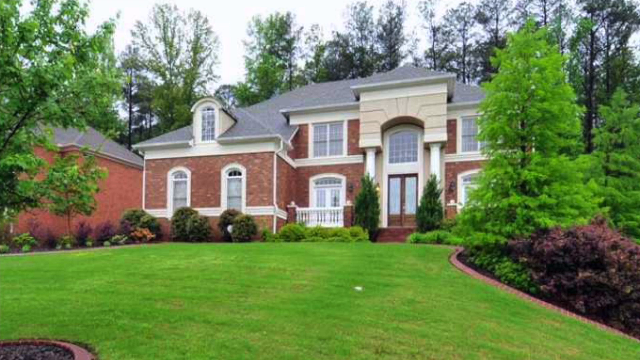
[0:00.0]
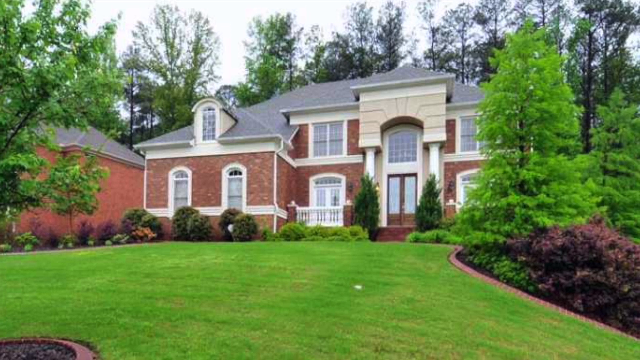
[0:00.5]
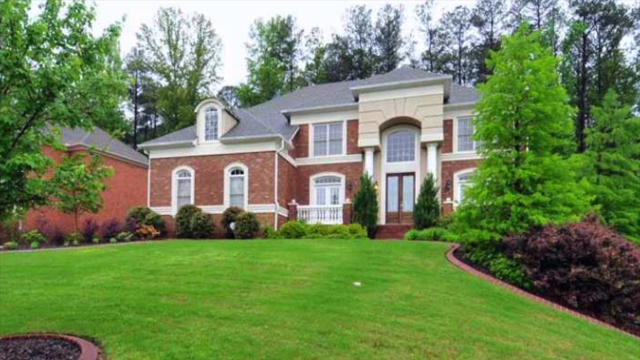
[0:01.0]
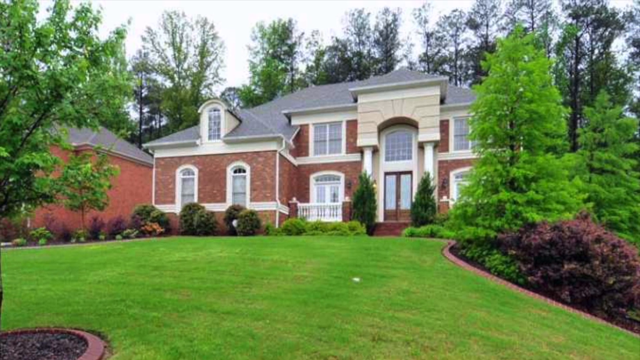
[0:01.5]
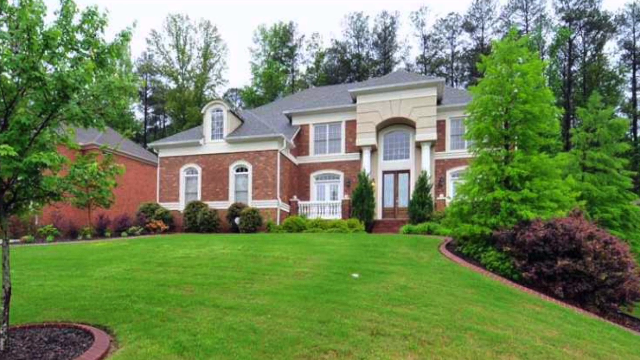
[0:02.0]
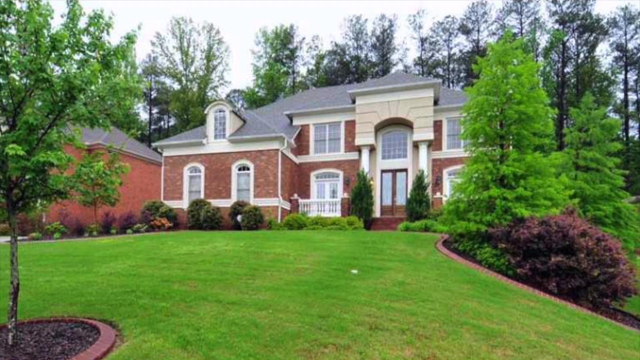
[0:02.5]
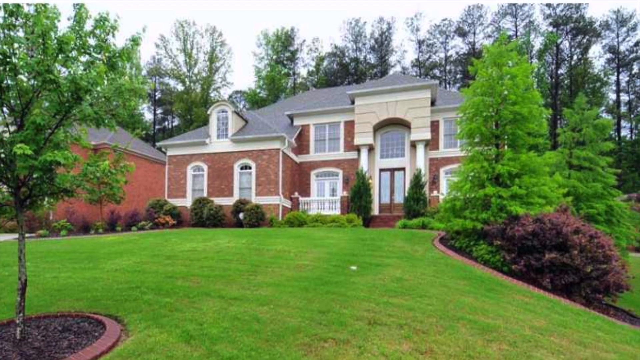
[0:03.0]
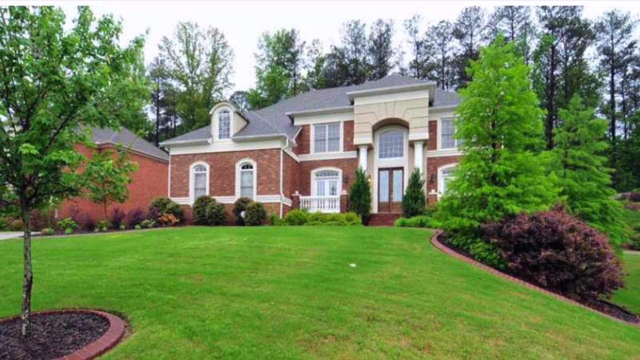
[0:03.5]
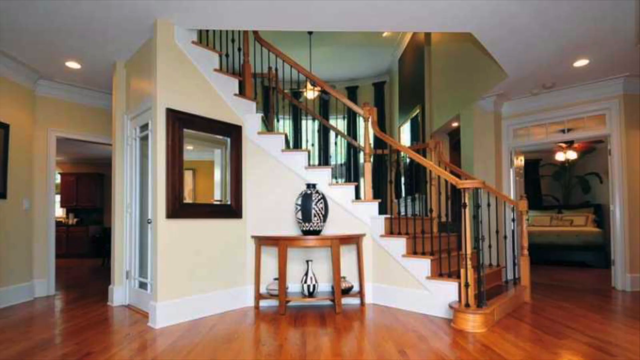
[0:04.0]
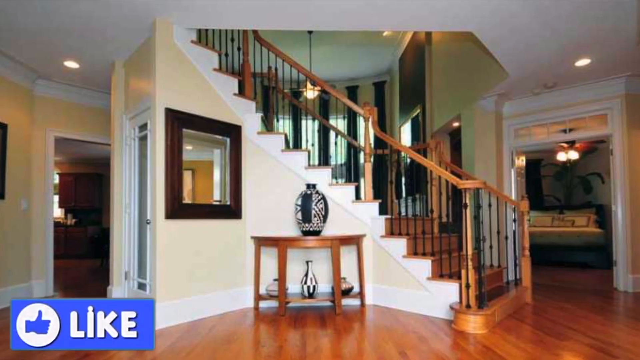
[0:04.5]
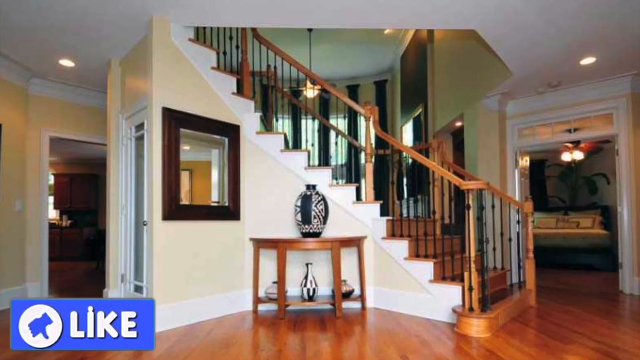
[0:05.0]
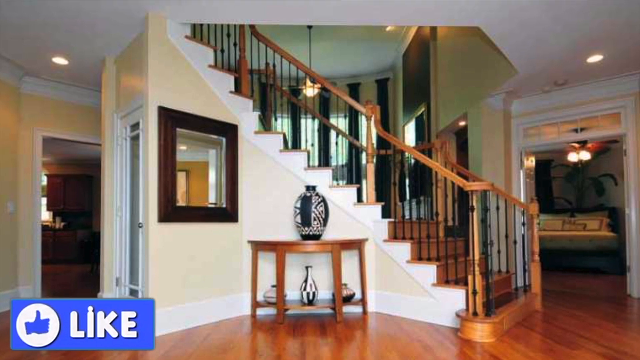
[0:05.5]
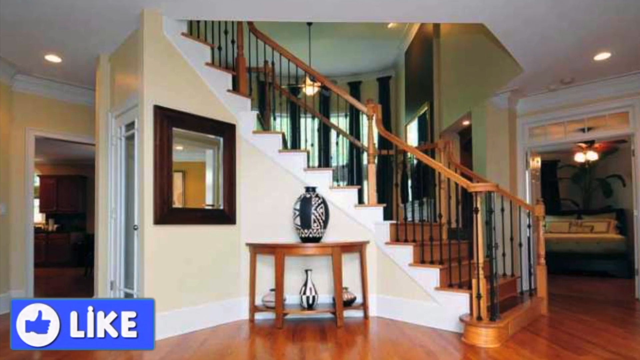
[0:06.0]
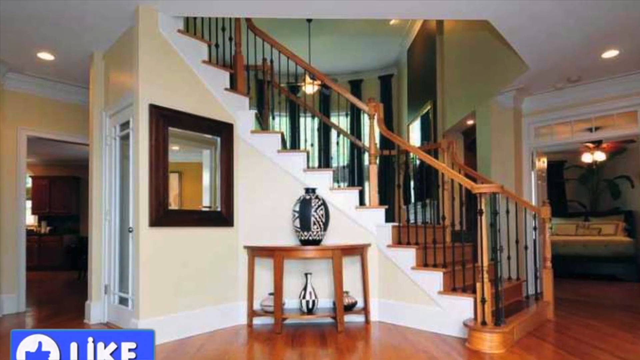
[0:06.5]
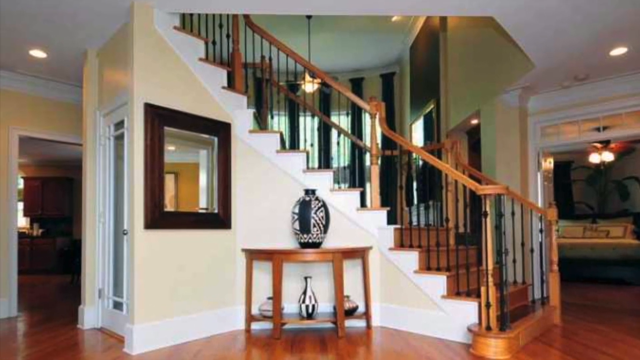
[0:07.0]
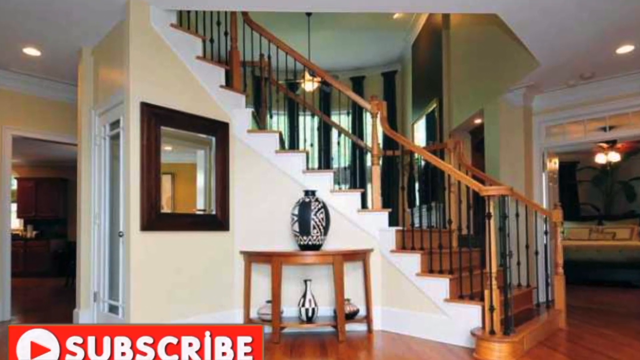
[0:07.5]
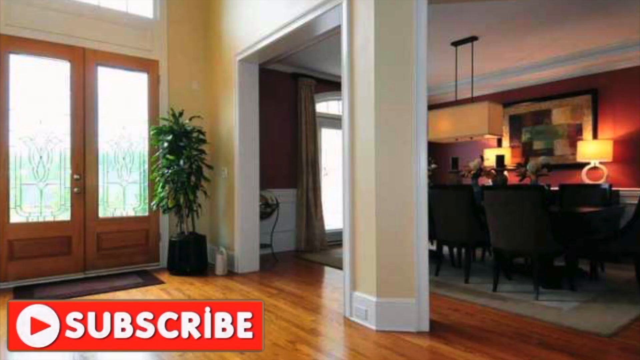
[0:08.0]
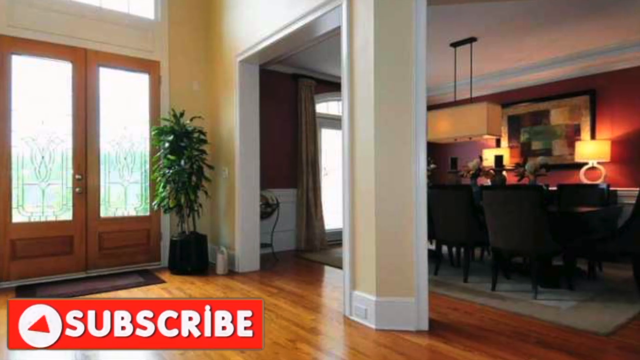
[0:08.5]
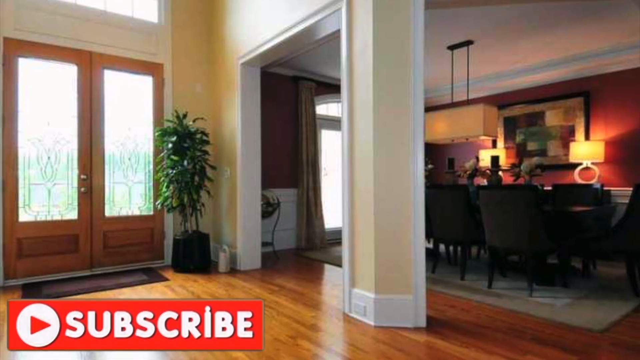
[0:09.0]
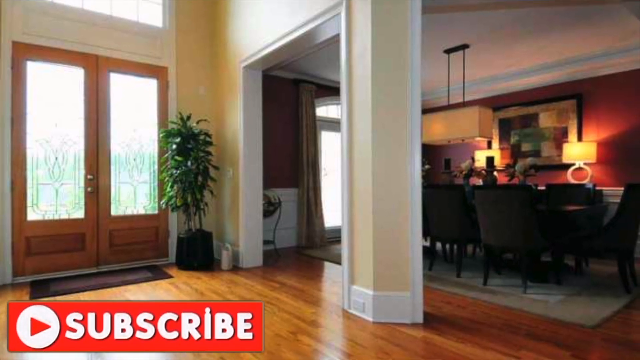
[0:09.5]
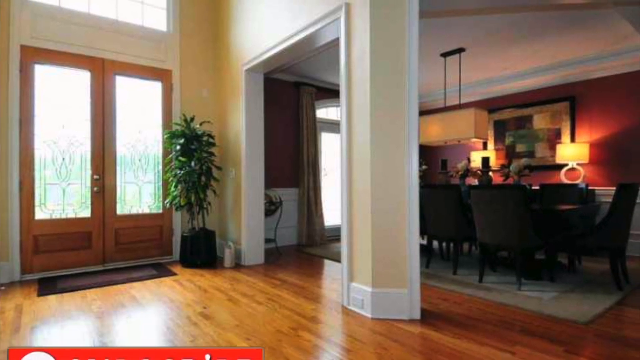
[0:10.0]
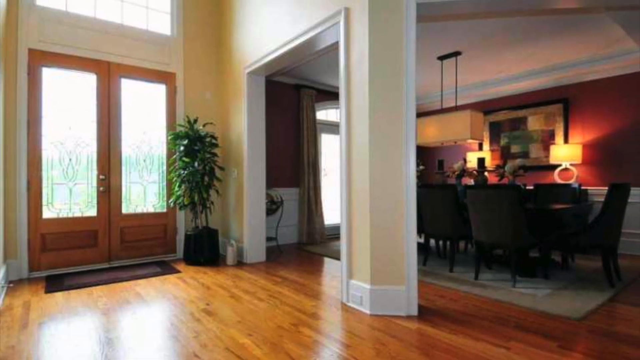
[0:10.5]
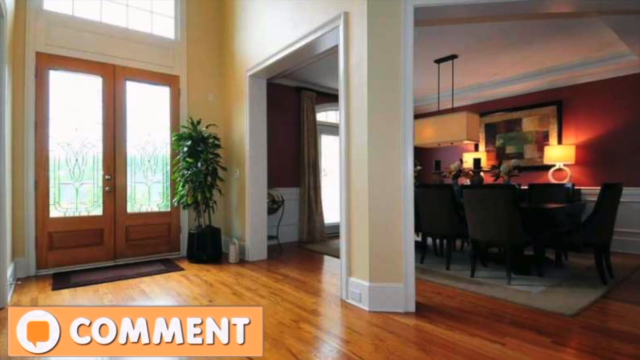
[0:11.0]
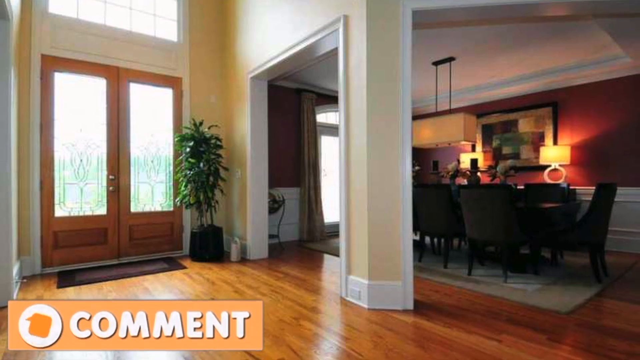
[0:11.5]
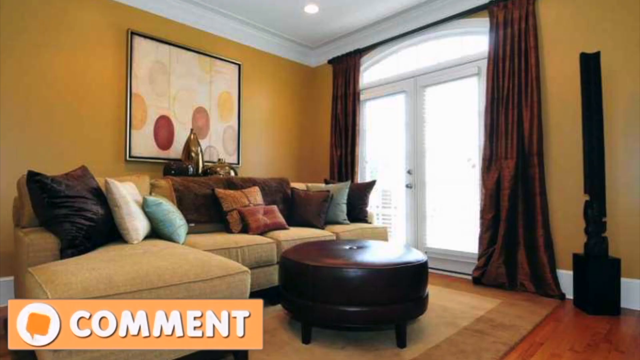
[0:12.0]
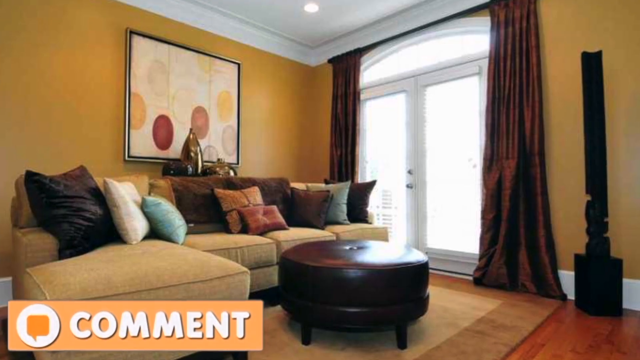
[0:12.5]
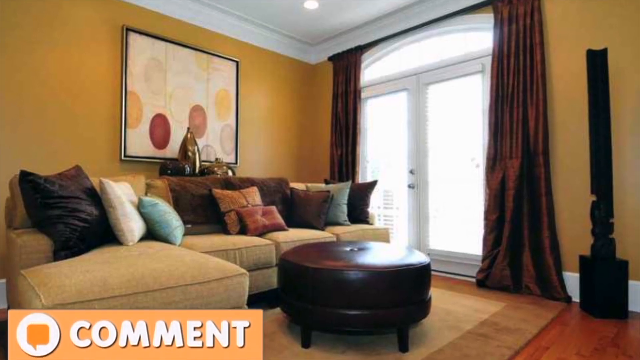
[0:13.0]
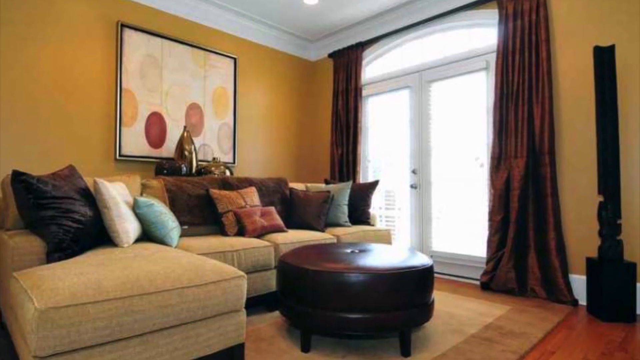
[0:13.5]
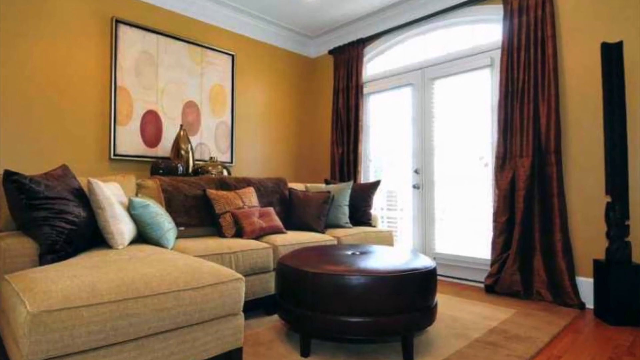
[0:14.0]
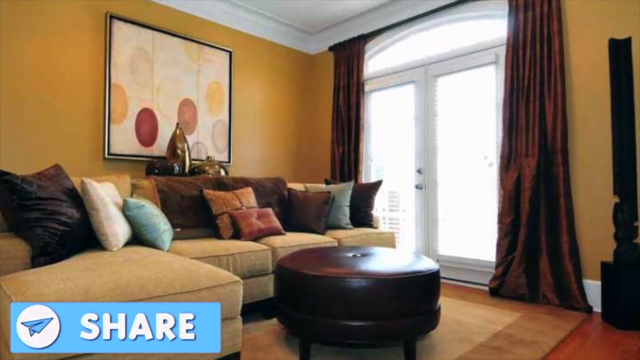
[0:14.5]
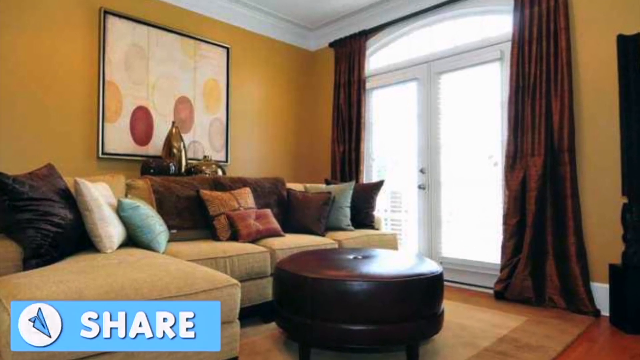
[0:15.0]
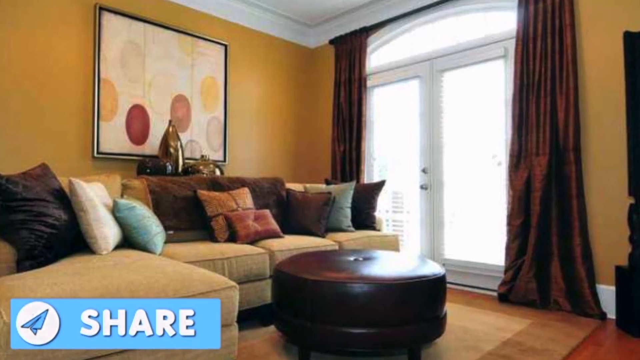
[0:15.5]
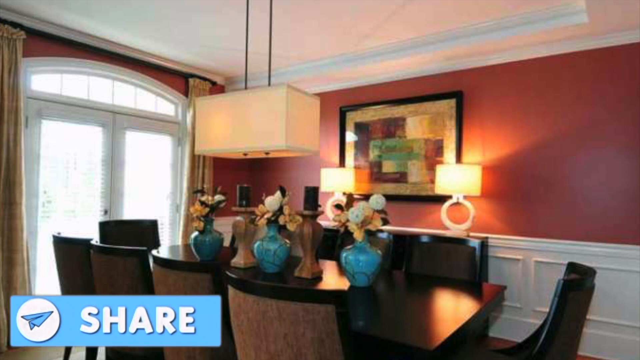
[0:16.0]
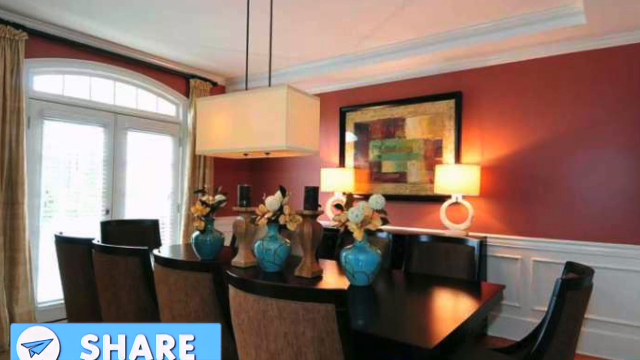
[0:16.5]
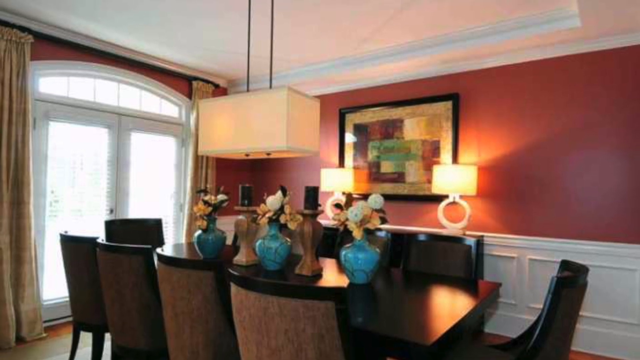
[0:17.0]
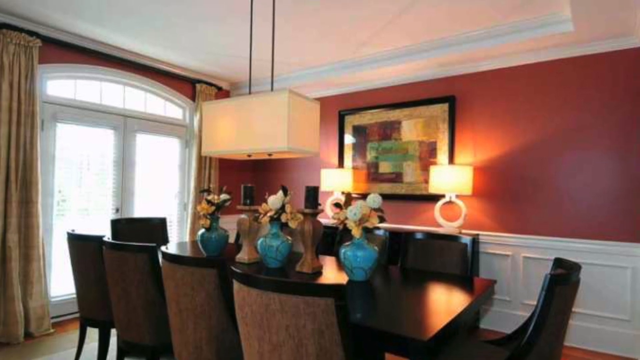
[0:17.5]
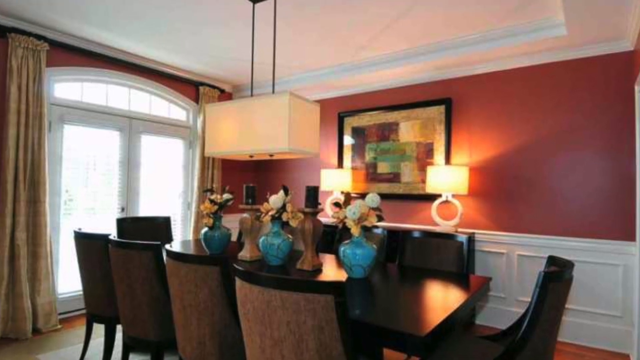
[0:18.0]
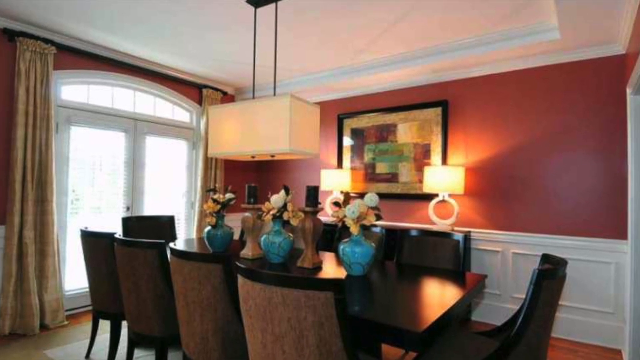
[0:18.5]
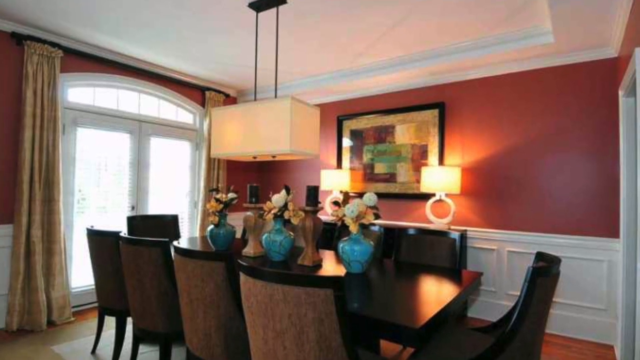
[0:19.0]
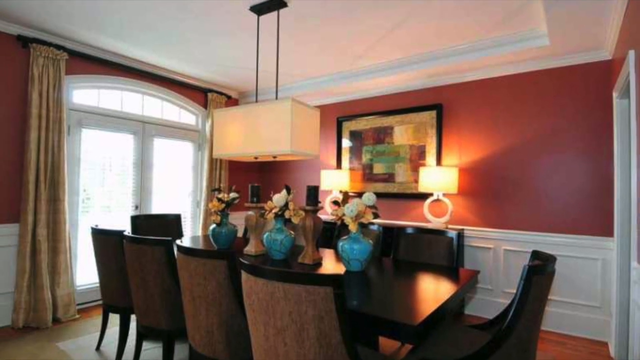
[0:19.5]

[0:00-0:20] The front yard of a house appears, with a well-manicured lawn, trimmed bushes on either side of the house, trees in the yard and large trees in the background. The house has a face brick exterior with white paint around the window frames and door frame, and next to the door there are two large pillars with two small trees in front of them. The view then moves inside the house, and a like button appears in the bottom left. What appears to be the landing just inside the front door shows a curving staircase going up in the middle of the frame, a table with some vases on it, and a mirror on the wall by the stairs. An opposite view shows the front door, which has two large doors, and to the left of it a dining room with a black dining table and black dining chairs. Another view shows what appears to be a lounge with a tan L-shaped couch holding various colored pillows; the room is yellow and has a round brown ottoman in front of the couch. Another dining table follows, this one brown with dark brown chairs that have tan leather cushions.